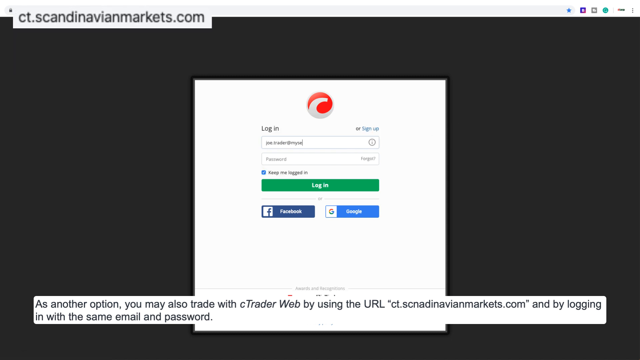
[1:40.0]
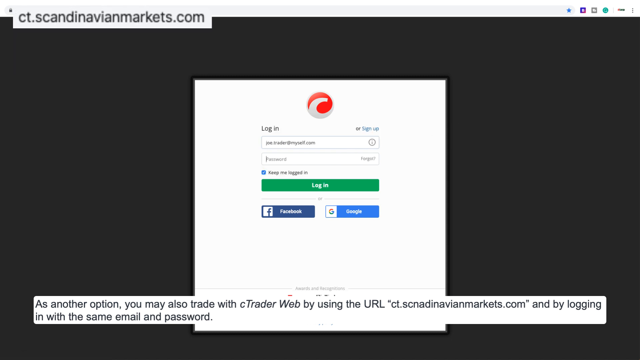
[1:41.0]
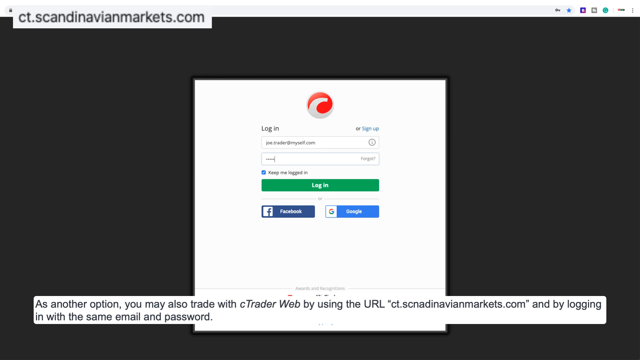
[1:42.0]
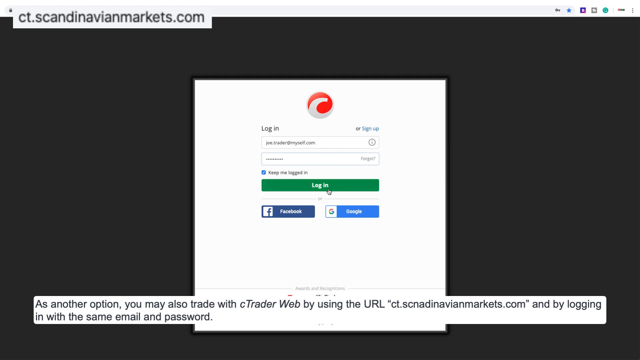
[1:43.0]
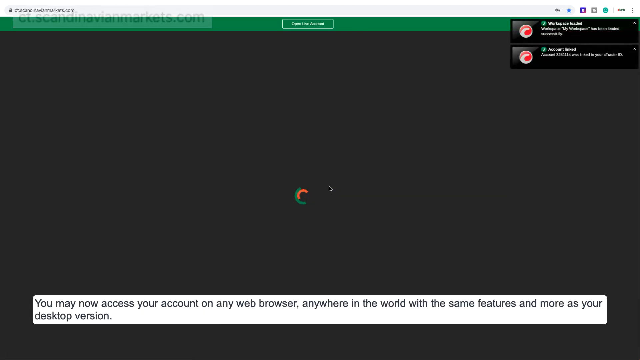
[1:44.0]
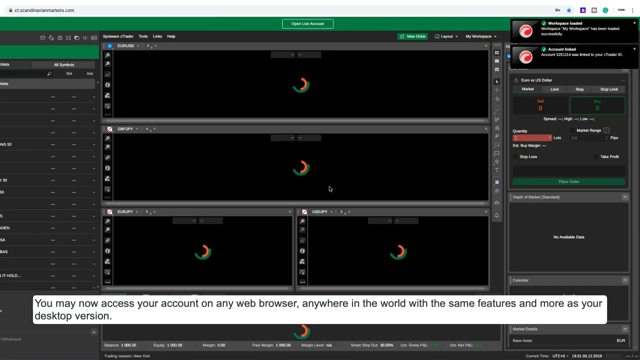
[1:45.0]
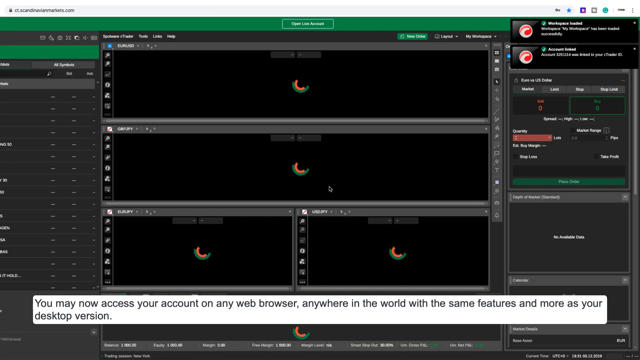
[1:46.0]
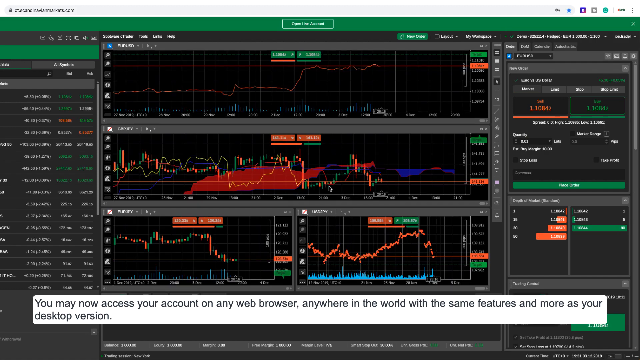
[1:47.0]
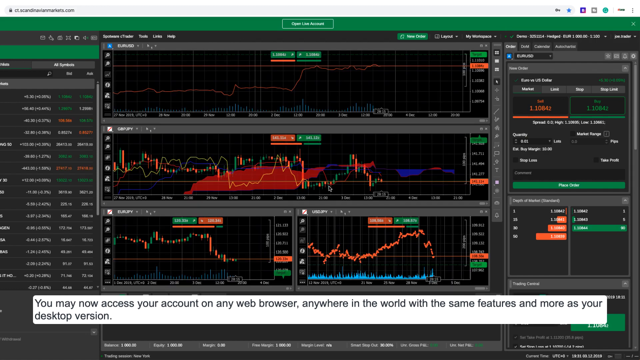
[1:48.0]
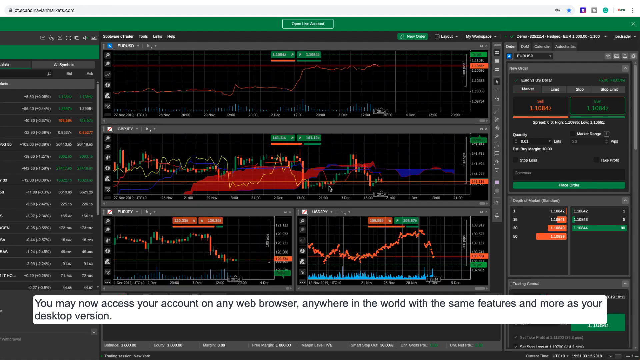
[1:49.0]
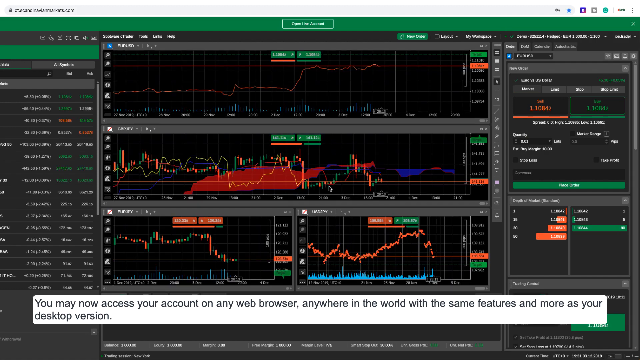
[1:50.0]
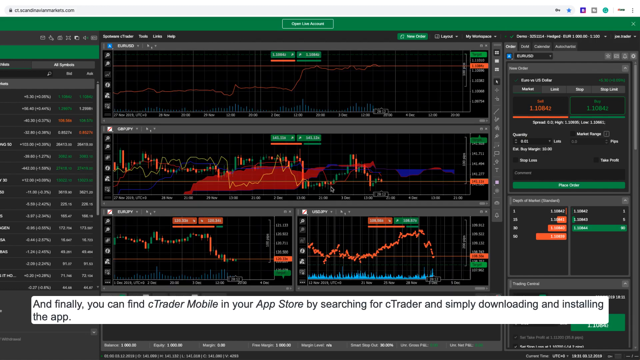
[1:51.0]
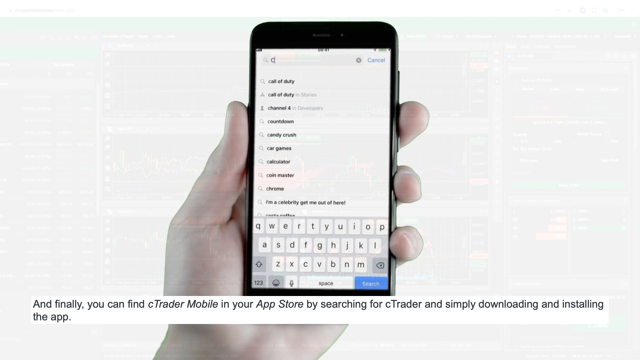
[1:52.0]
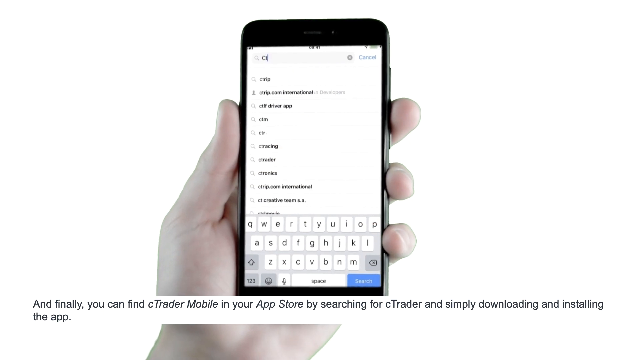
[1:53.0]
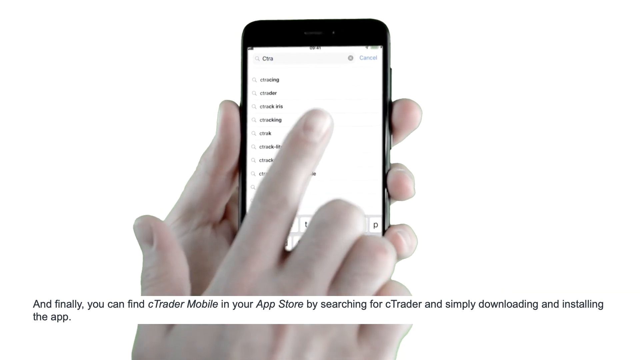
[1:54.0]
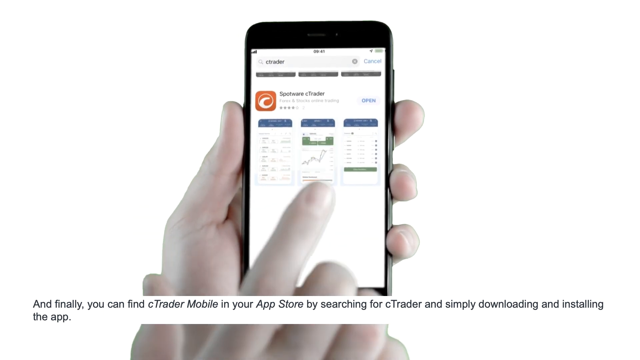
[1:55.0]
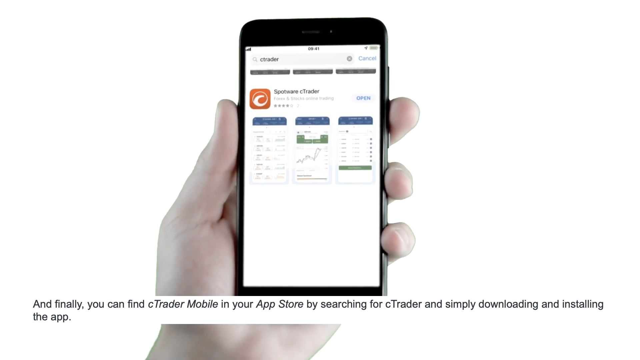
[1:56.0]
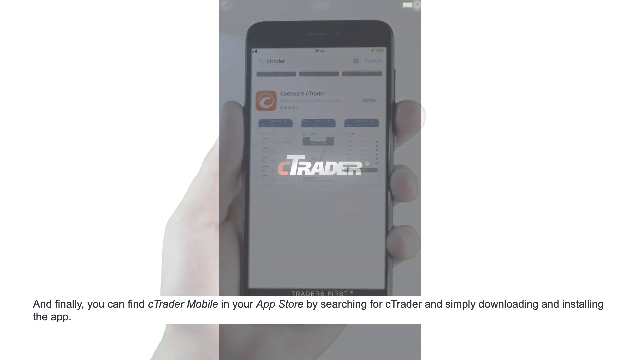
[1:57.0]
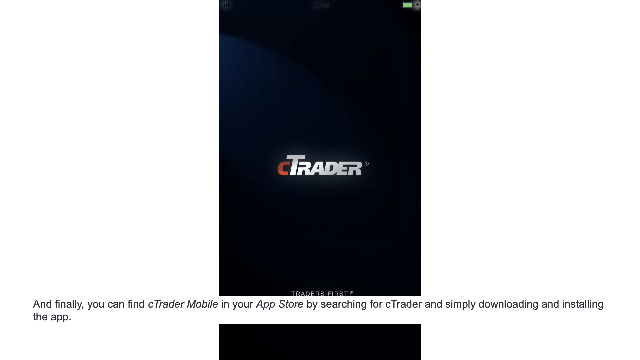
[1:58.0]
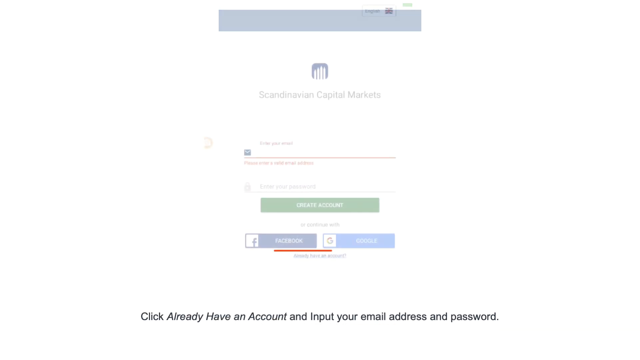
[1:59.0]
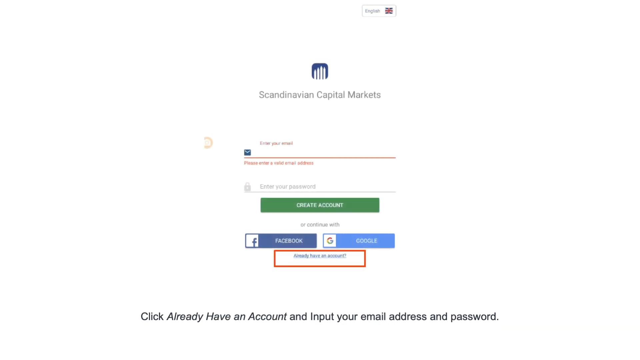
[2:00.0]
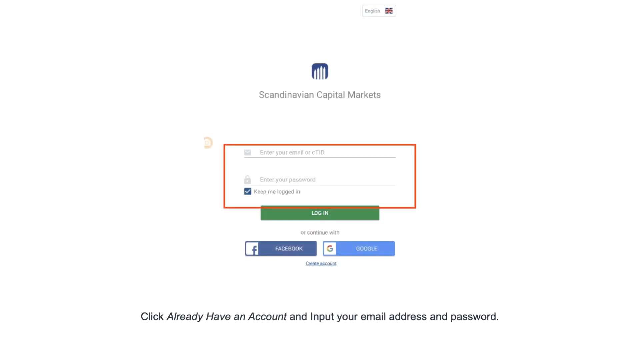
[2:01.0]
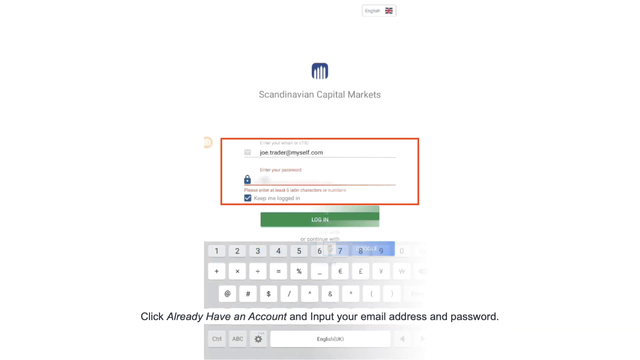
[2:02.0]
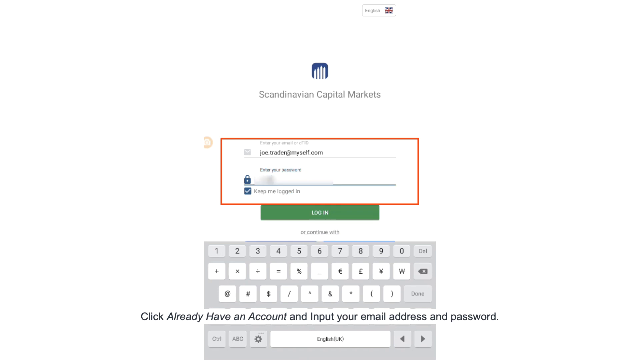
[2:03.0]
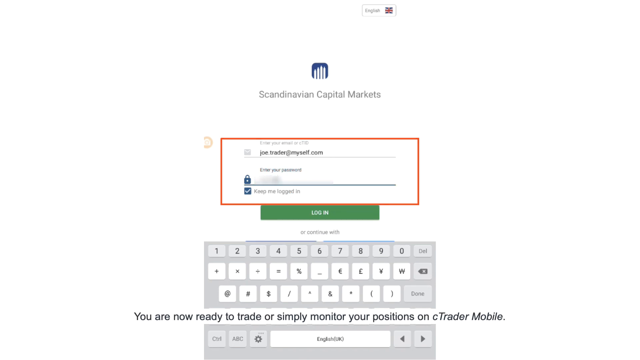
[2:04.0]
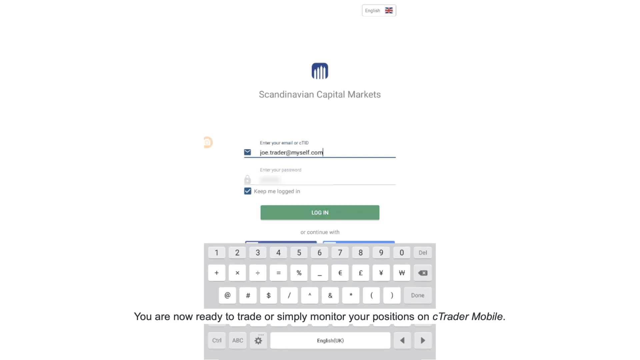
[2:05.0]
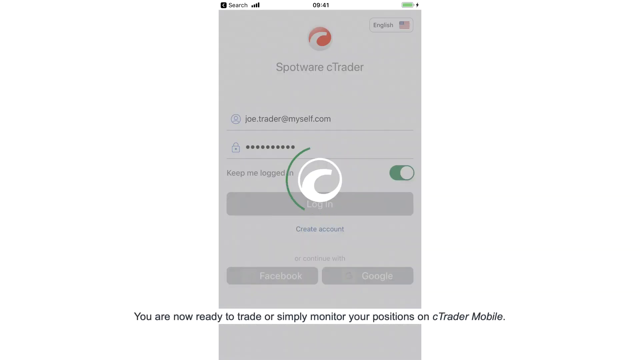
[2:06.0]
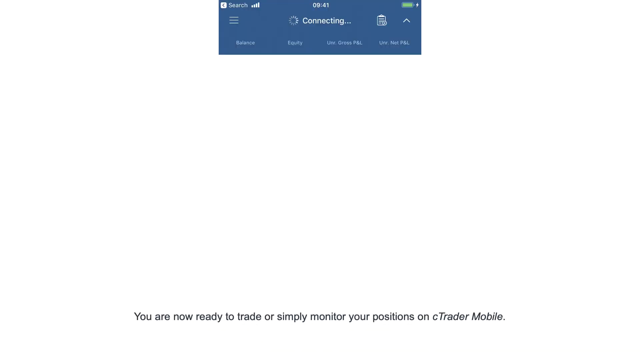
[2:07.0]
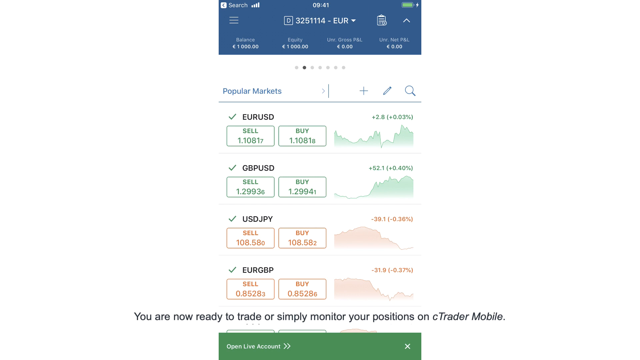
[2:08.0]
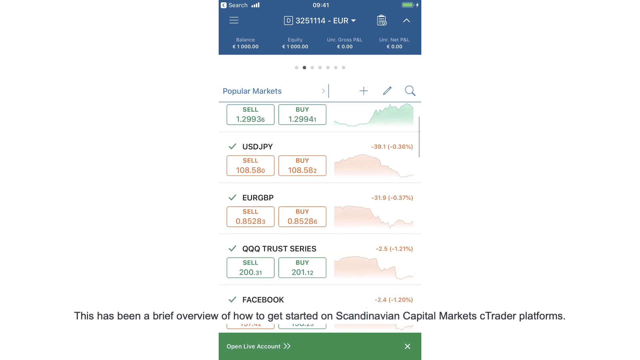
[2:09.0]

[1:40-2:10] At the login page, the account email and password are entered into the text boxes and the login button is pressed. A green semicircle with a smaller orange semicircle in the center of the page shows loading progress. Once loading is finished, the page changes to show stock trading tracking through various graphs, numbers and charts. The page is charcoal gray with green accents, orange accents and red highlights, and green and orange bars and squiggly lines show the stat tracking. The page fades to the cell phone application; the phone is held by a left hand, and a right hand comes into view, taps on the name cTrader, and changes the view to show cTrader stat tracking. The screen then fades out to the cTrader logo on a black screen. The page fades to another signup page, where a red box at the bottom highlights where to change from signup to login once the account information is entered. A page then shows various stat tracking for different websites and groups, with graphs of various stock highs and lows and options to buy or sell stock from the various groups.